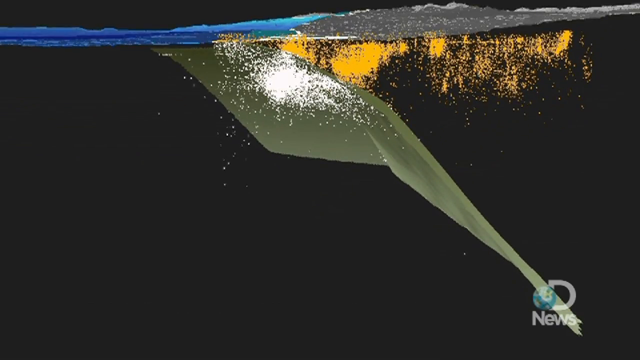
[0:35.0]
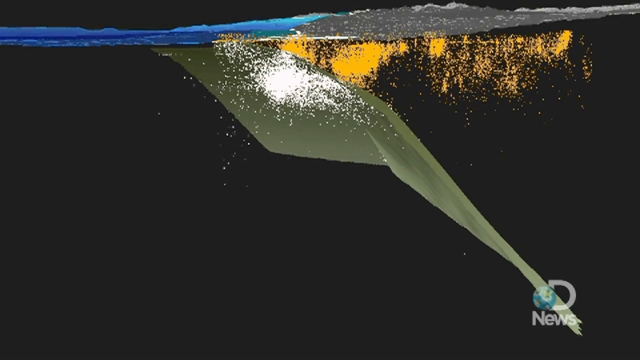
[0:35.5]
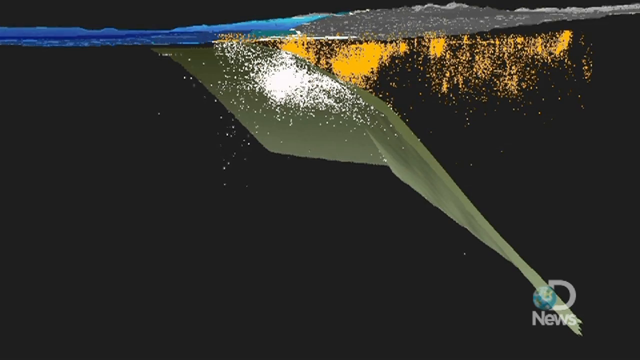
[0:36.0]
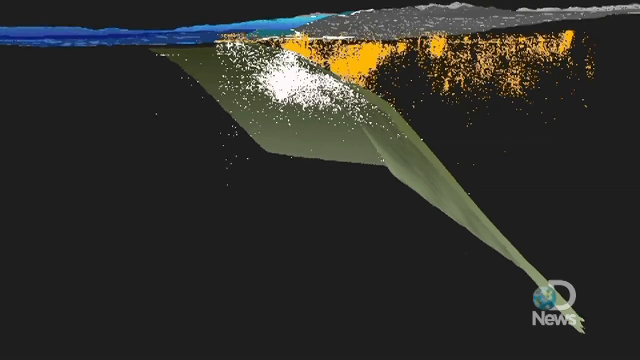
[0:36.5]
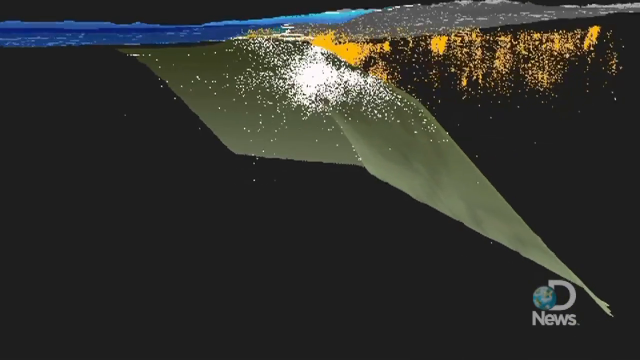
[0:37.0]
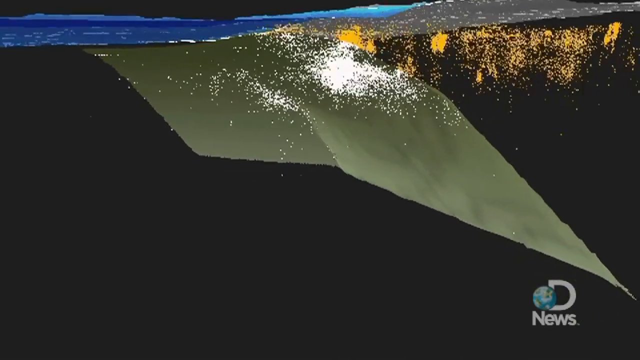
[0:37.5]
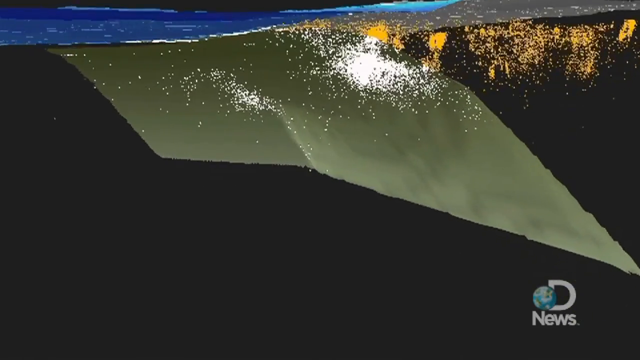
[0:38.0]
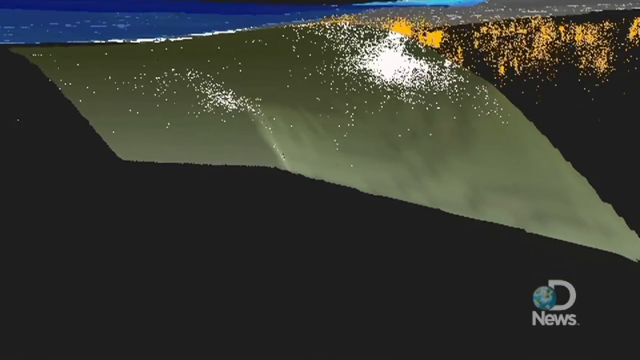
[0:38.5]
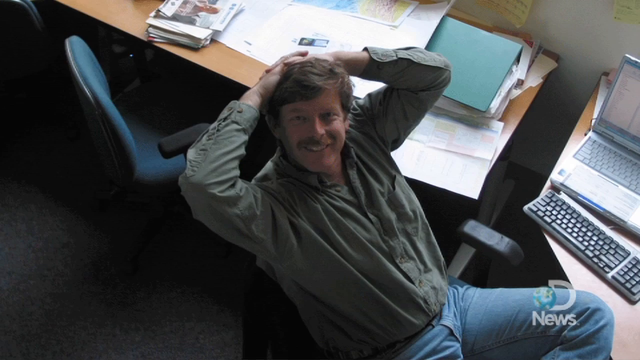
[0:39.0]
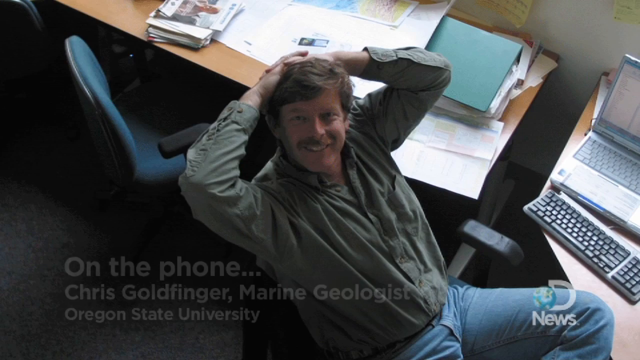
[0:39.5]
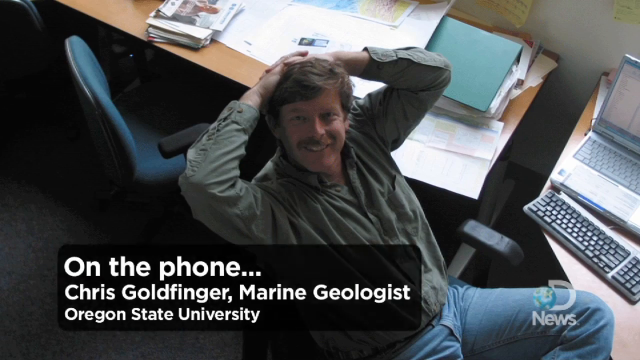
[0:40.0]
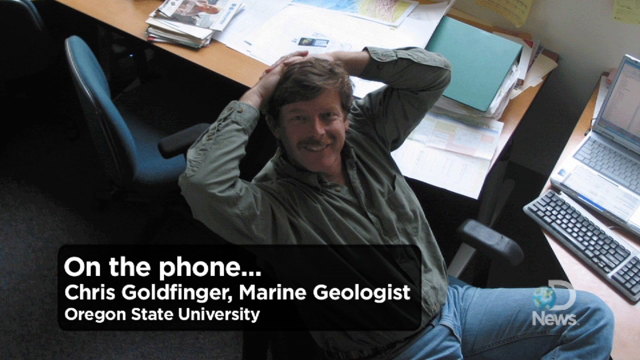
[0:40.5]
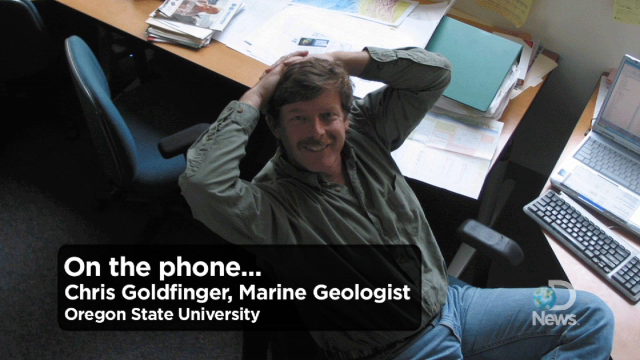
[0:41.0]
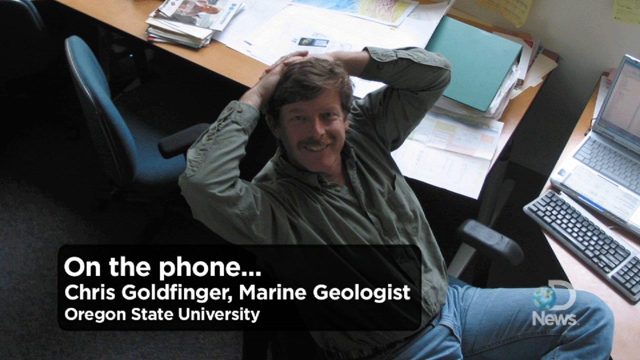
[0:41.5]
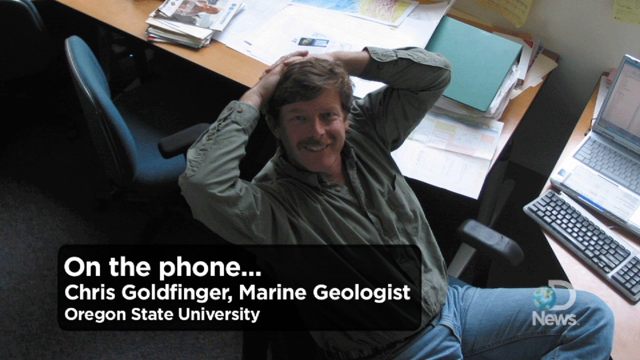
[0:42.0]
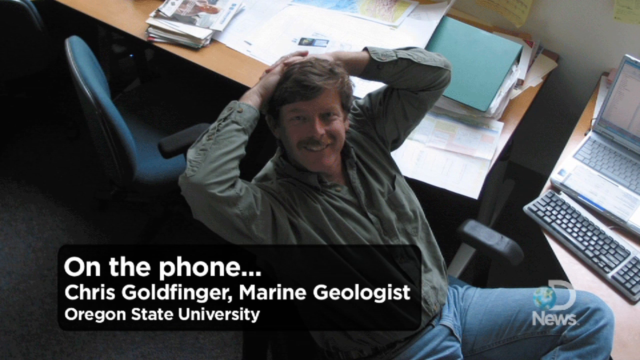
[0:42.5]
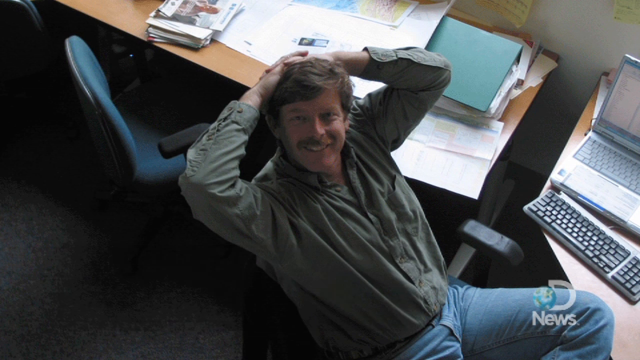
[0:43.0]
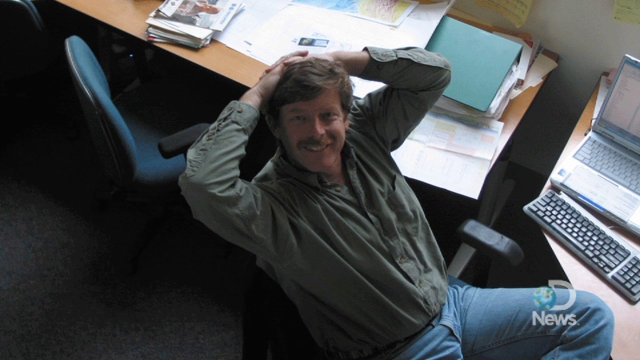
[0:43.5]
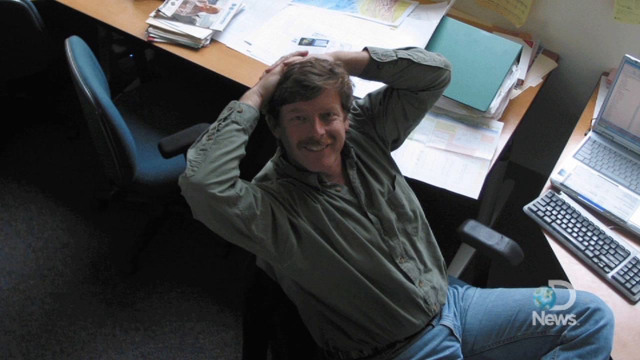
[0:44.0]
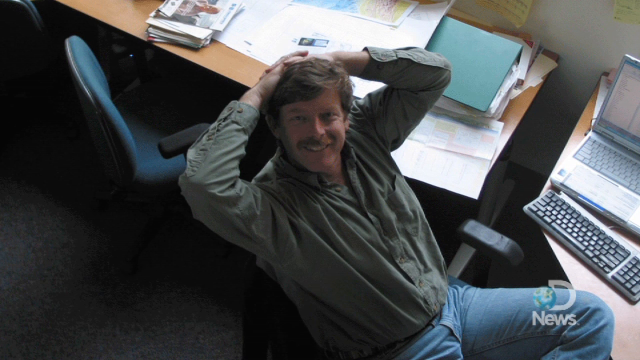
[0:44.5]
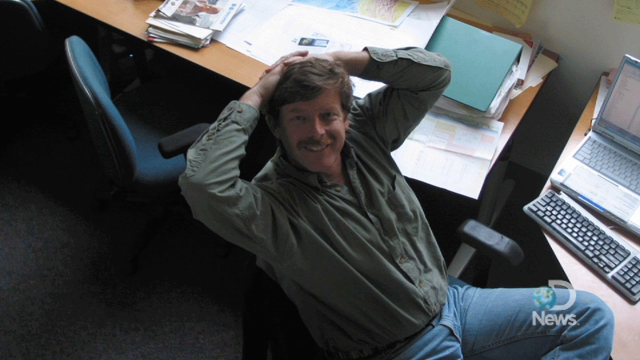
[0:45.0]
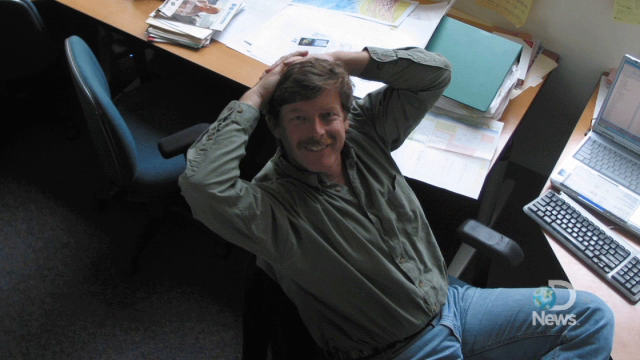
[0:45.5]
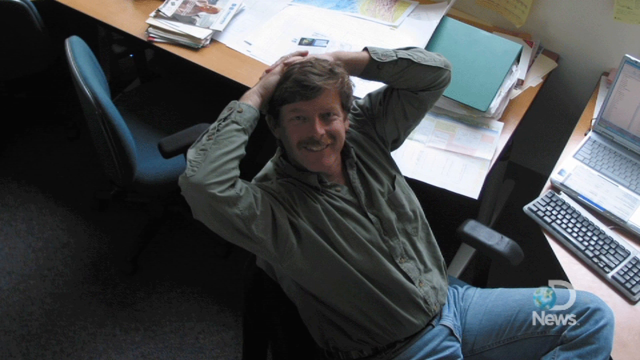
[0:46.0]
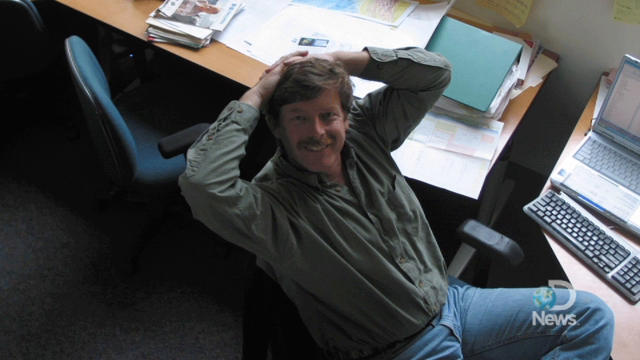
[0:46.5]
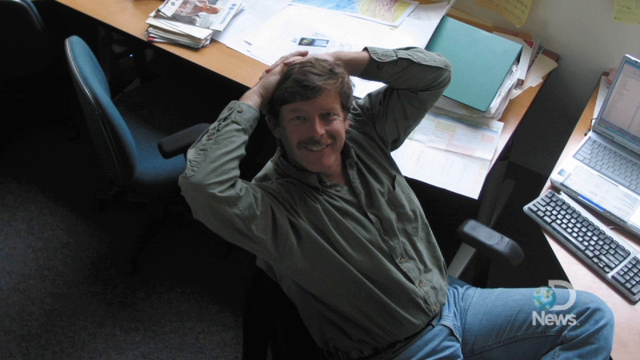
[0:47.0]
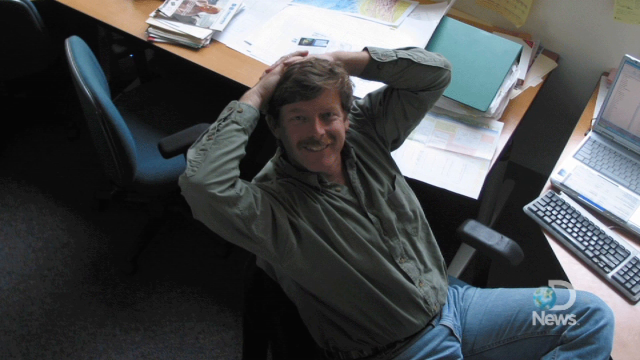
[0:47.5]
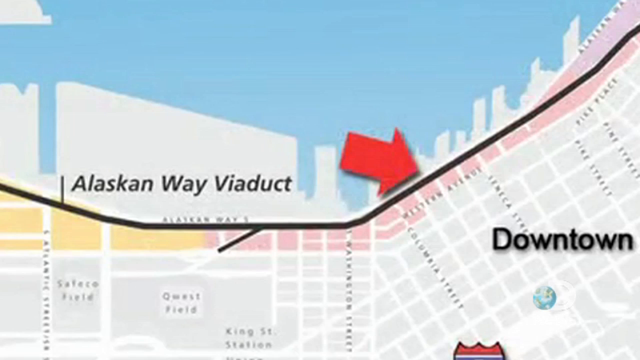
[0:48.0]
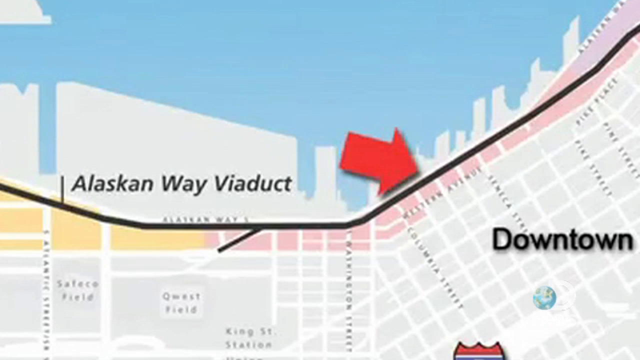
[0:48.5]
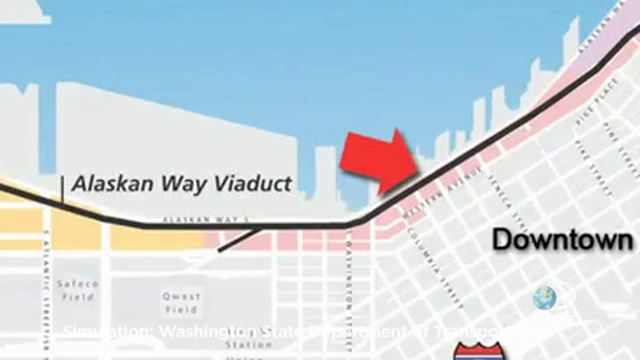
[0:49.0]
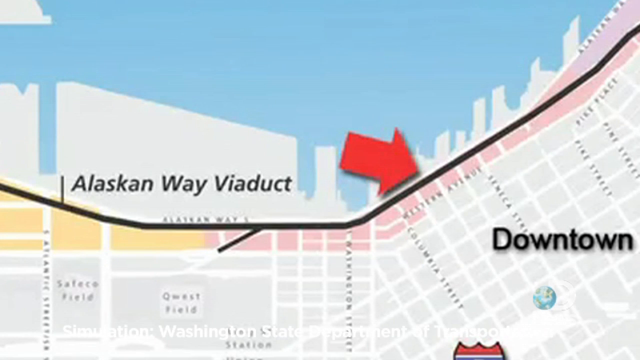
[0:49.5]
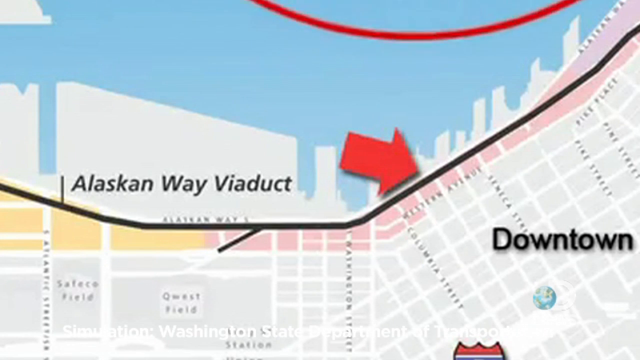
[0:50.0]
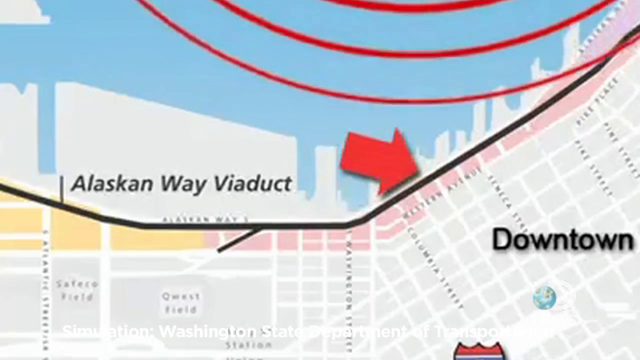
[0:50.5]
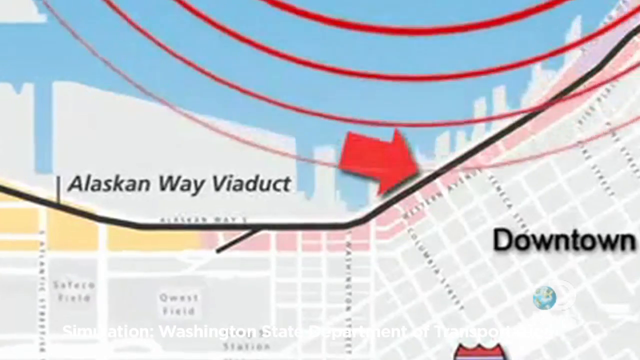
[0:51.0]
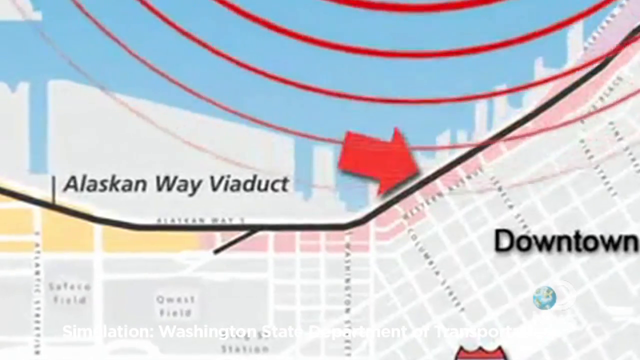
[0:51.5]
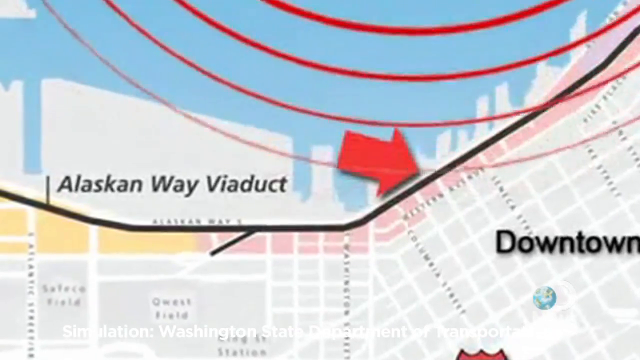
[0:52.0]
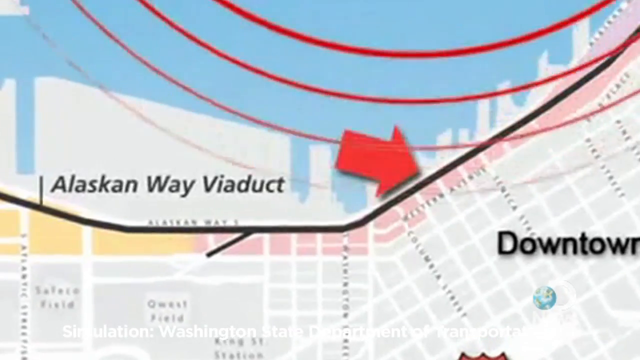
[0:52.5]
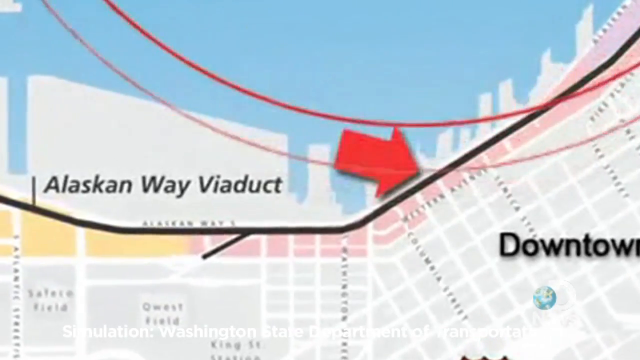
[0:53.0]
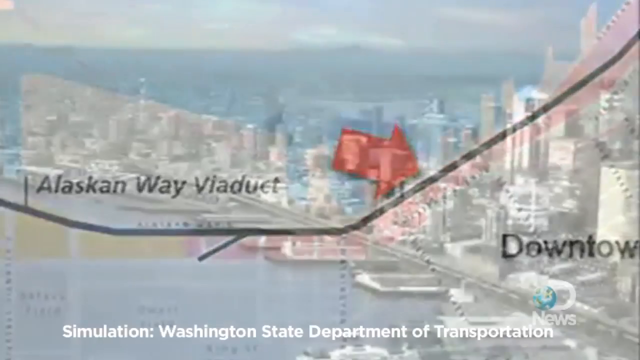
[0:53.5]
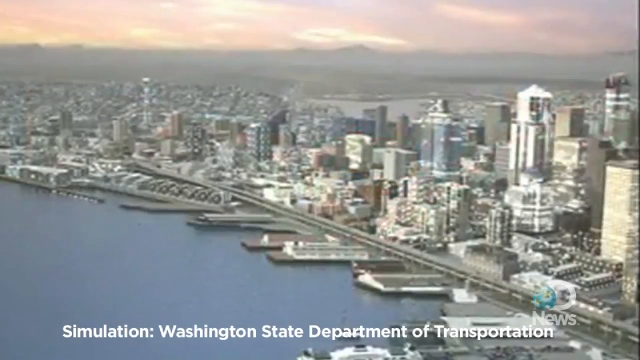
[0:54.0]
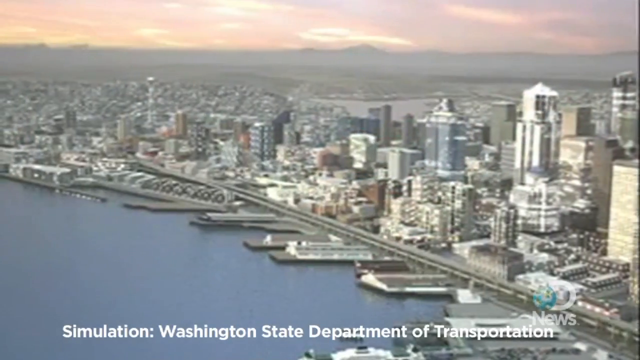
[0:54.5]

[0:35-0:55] Chris Goldfinger, a marine geologist with Oregon State University, speaks about the Pacific Northwest megaquake. The 3D model of the fault line underneath is shown. On the coastline, the illustration shows a downtown area, possibly Seattle, and the Alaskan Way Viaduct, and shows how the earthquake would come in from underneath the water up onto the coastline, with a lot of water. The illustration of the coastline and the Alaskan Way Viaduct is credited to the Washington State Transportation Department.